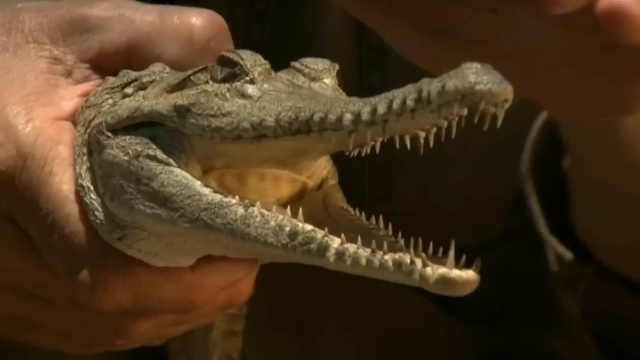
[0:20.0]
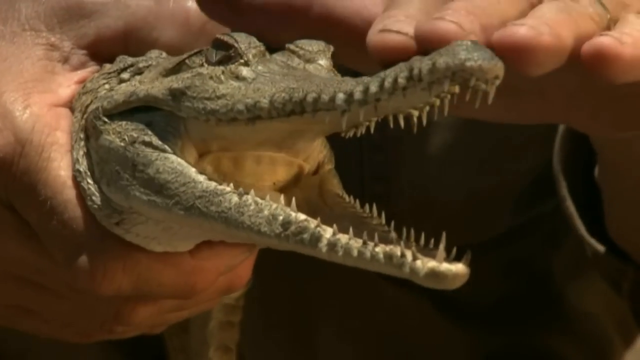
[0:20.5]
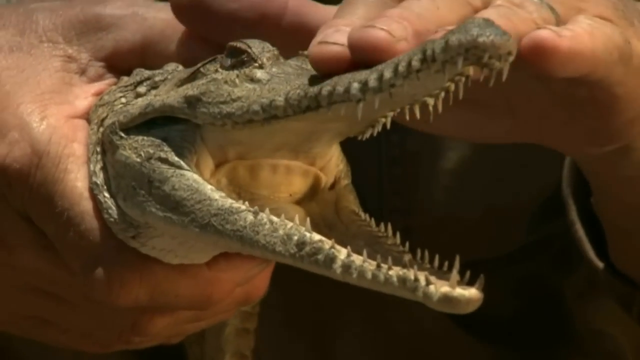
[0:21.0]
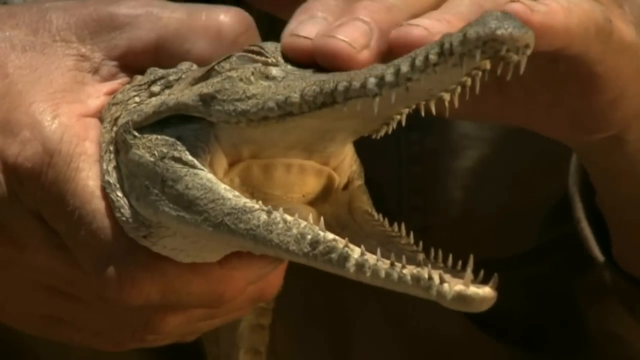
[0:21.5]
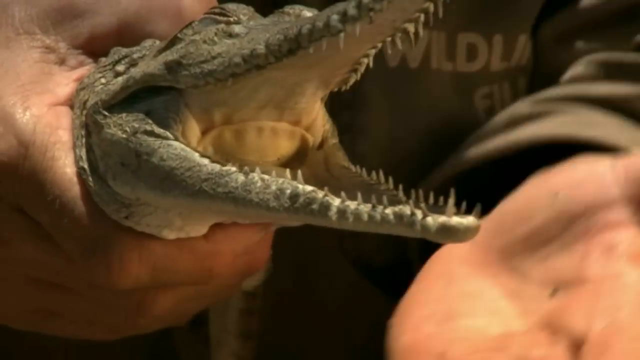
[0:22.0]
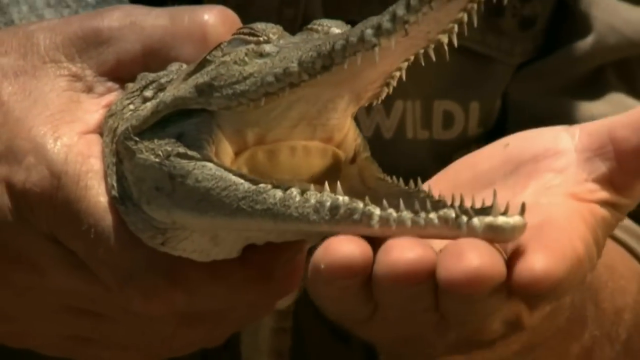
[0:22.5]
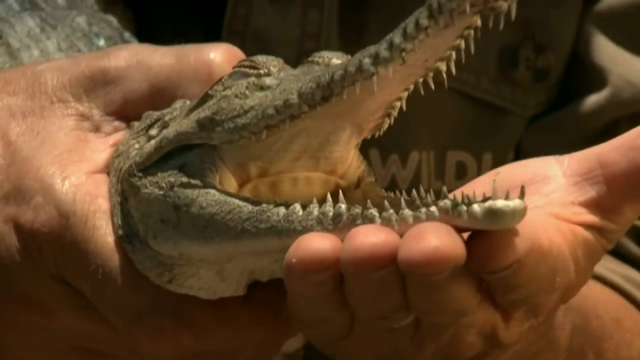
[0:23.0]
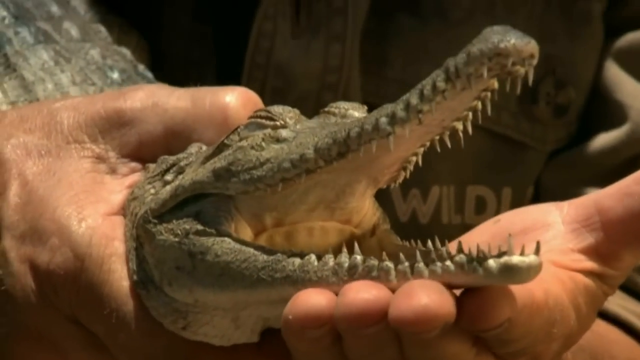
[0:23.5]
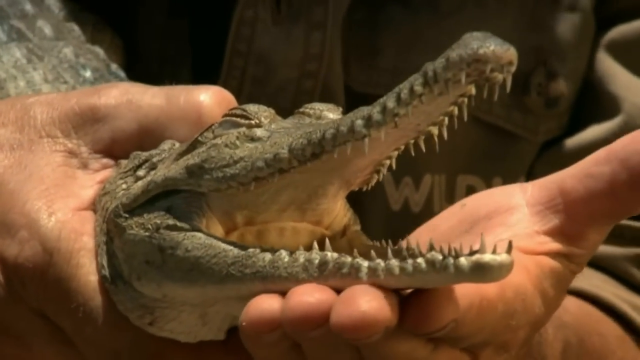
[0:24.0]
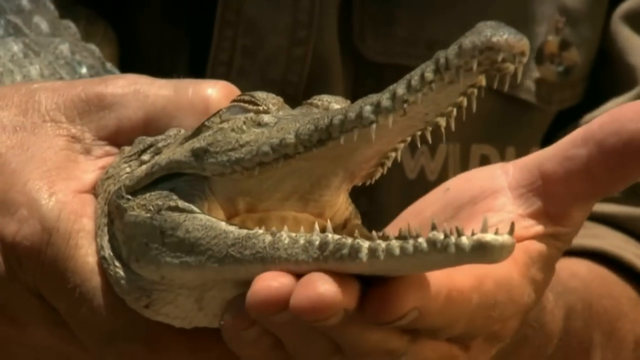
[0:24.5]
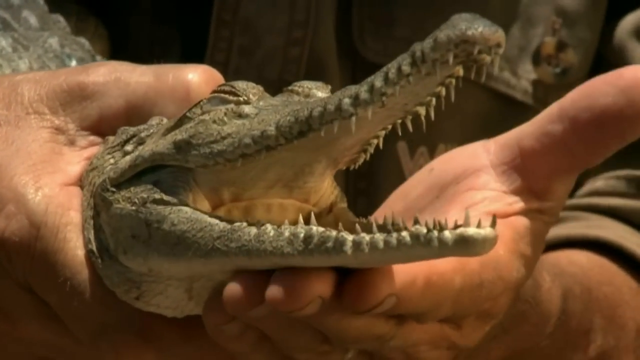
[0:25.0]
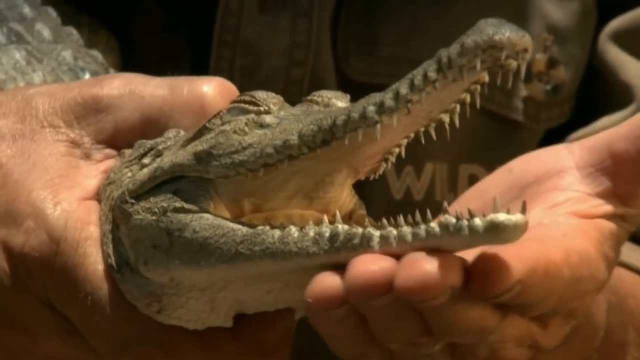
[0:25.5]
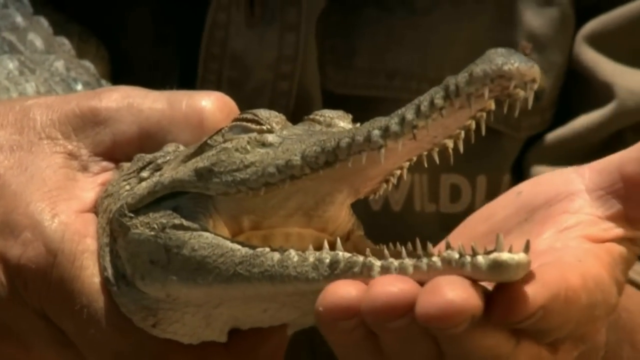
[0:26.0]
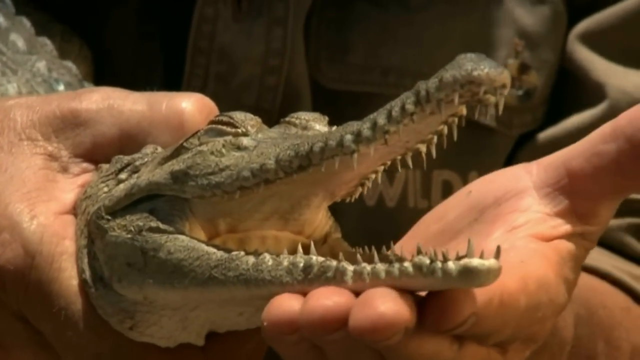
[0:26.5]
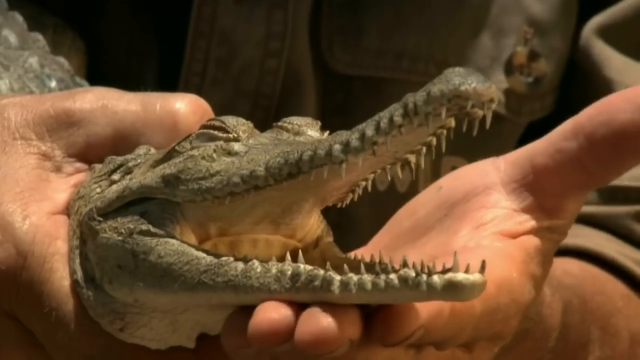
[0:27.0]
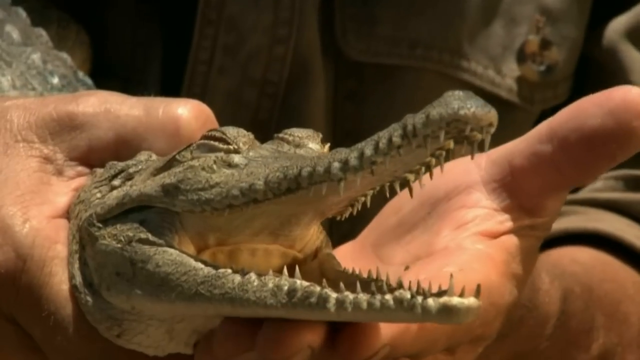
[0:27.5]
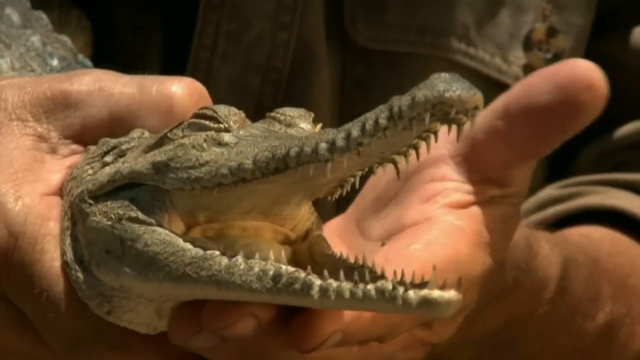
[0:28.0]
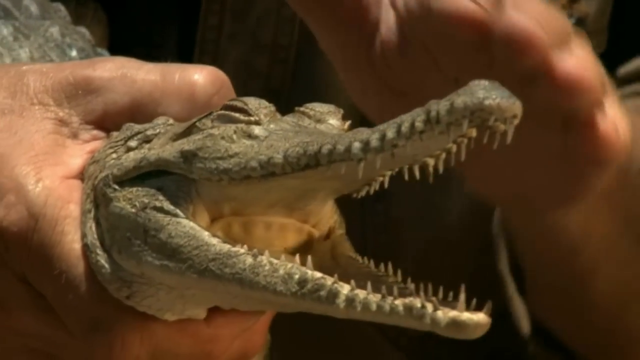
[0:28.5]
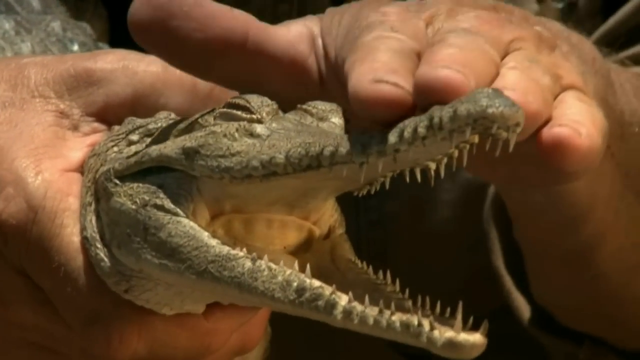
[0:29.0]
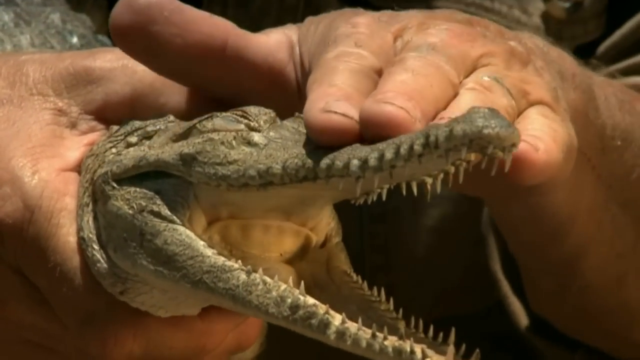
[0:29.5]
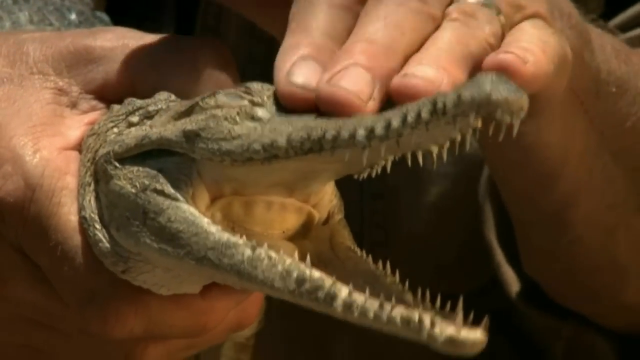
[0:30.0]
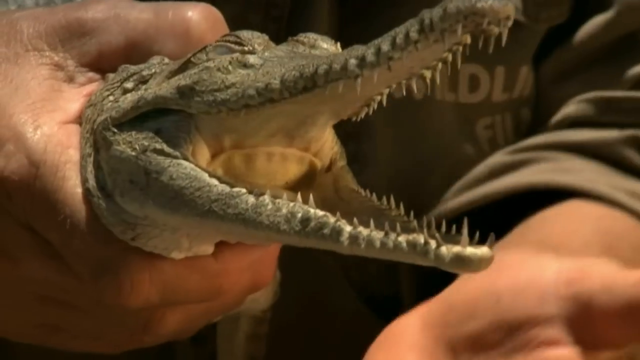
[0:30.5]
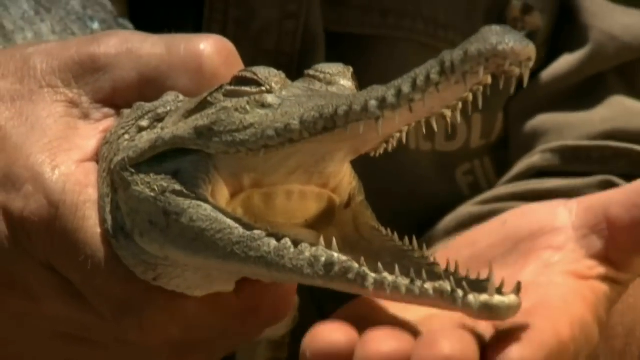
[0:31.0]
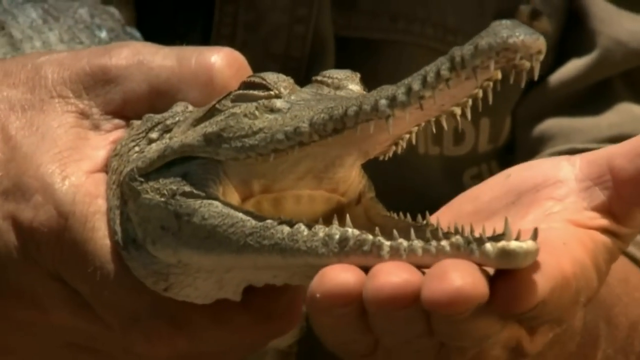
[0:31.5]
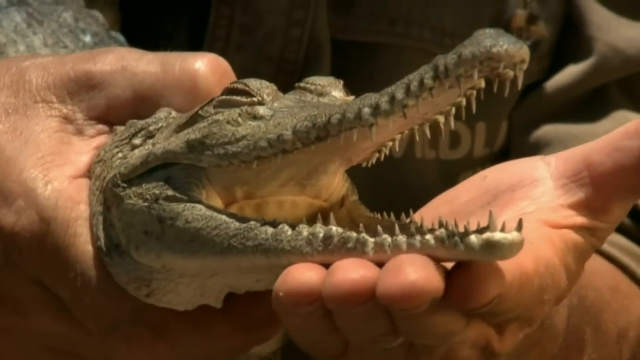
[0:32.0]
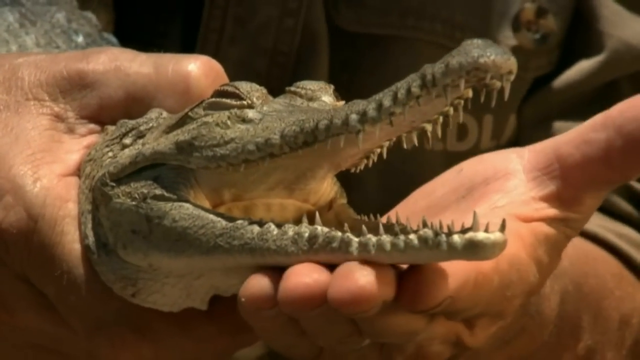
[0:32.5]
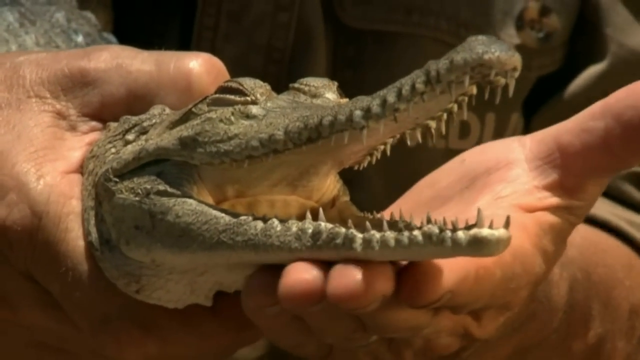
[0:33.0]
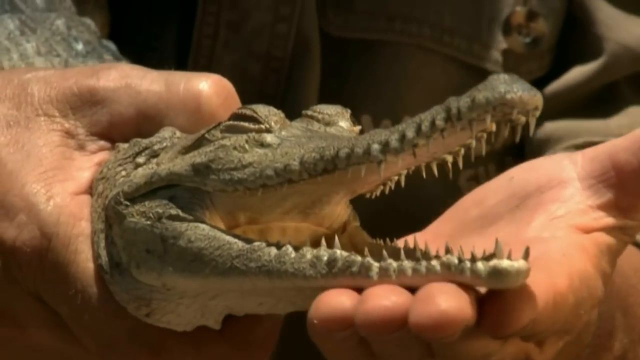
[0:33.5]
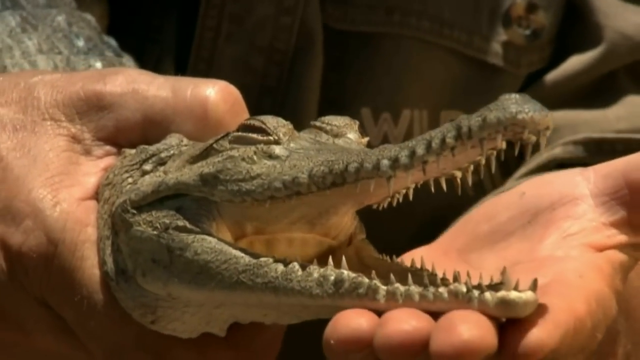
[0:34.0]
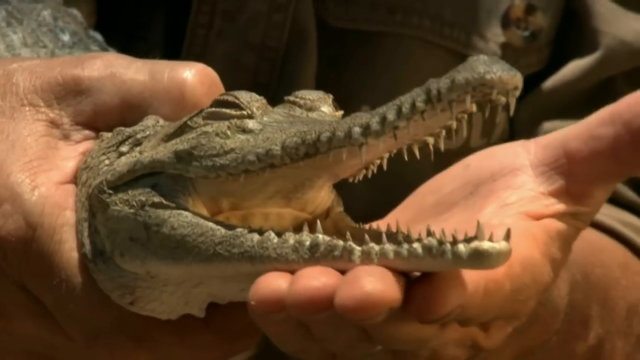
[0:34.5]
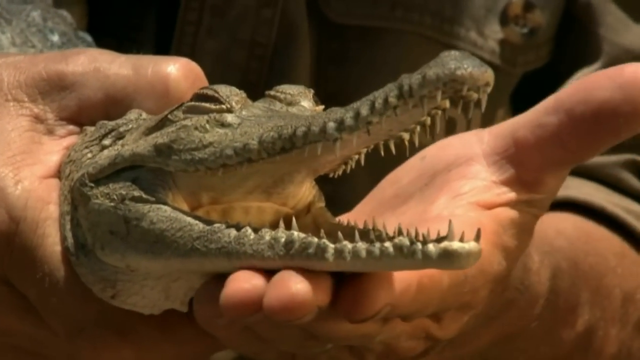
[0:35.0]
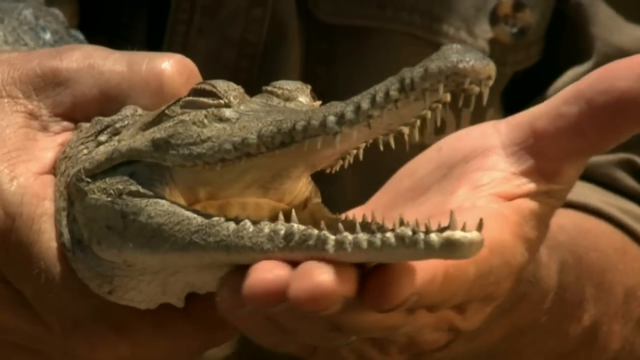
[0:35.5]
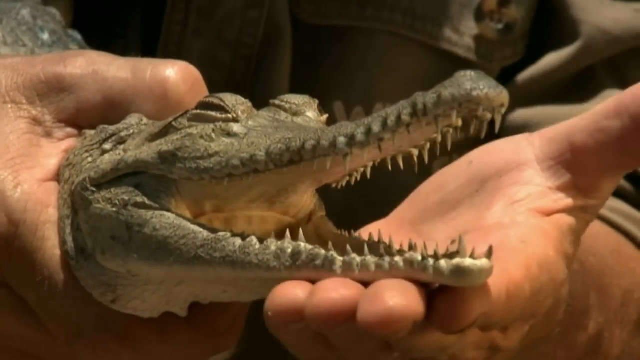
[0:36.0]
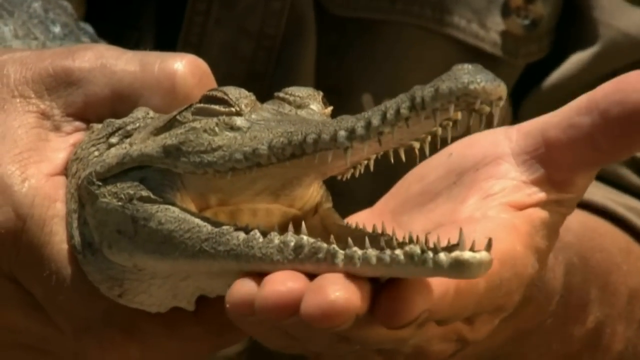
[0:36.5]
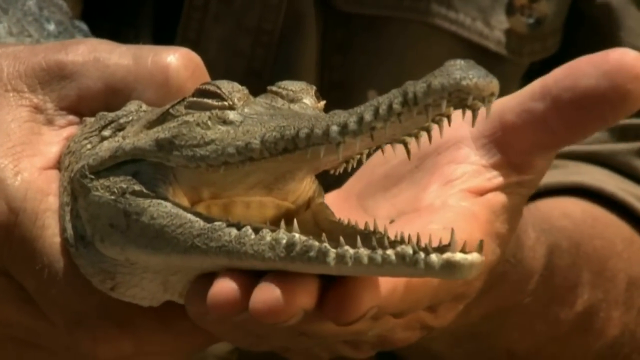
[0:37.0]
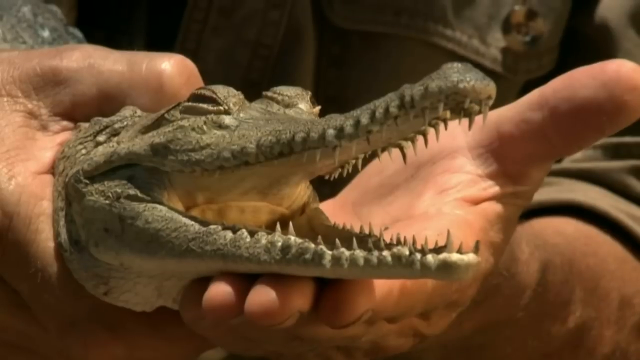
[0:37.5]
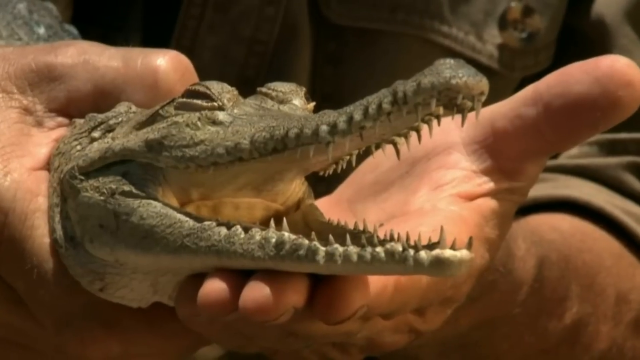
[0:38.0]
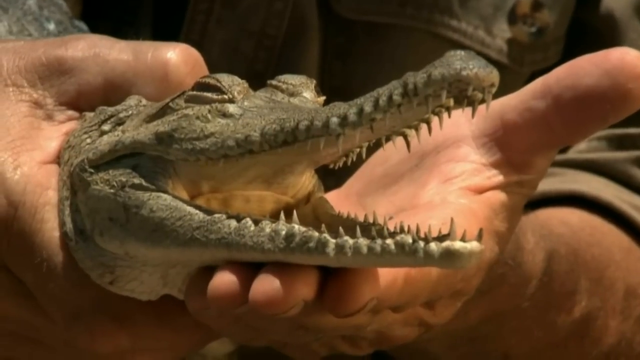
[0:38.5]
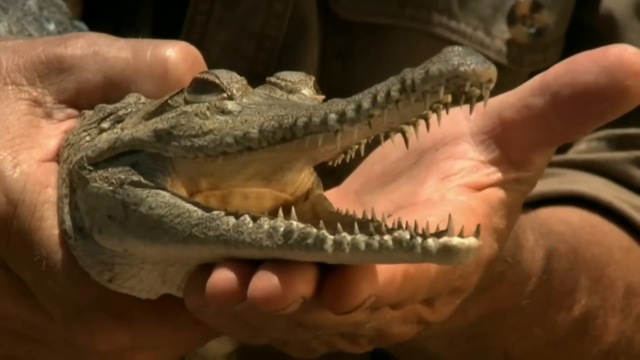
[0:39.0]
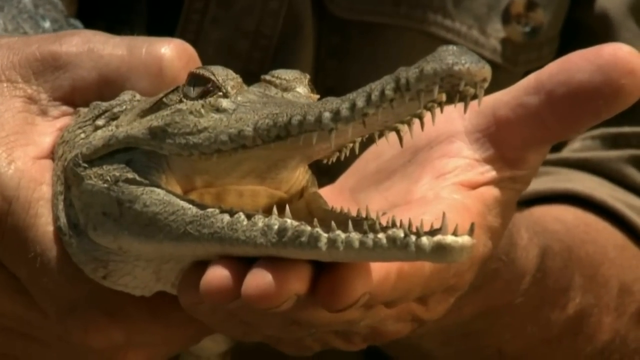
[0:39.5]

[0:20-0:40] The man seems to be strangling the small crocodile at its throat as it opens its mouth. The crocodile closes its eyes, and the inside of its mouth is shown with all of its teeth visible; the teeth all seem like canines. The man places his hand under the crocodile's mouth. On the man's t-shirt or shirt is the text "wildlife". The man then seemingly moves his hand back and forth under the crocodile's mouth, moving his hands around the crocodile. The crocodile seems like it might be in pain, closing its eyes as it opens its mouth.